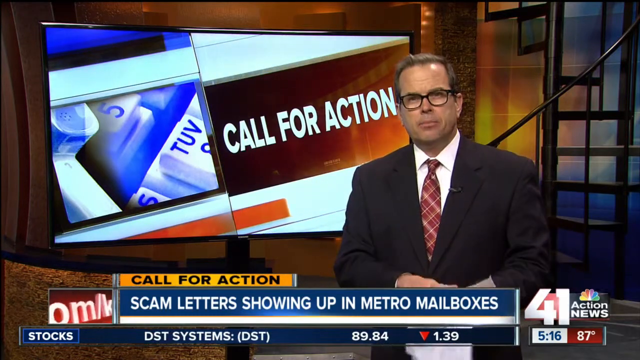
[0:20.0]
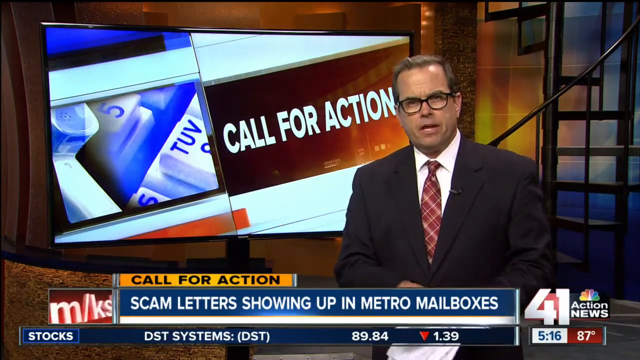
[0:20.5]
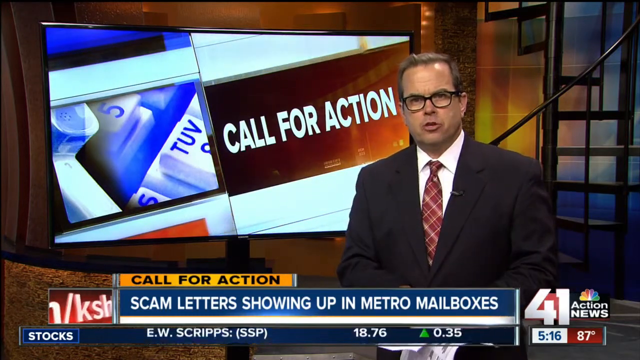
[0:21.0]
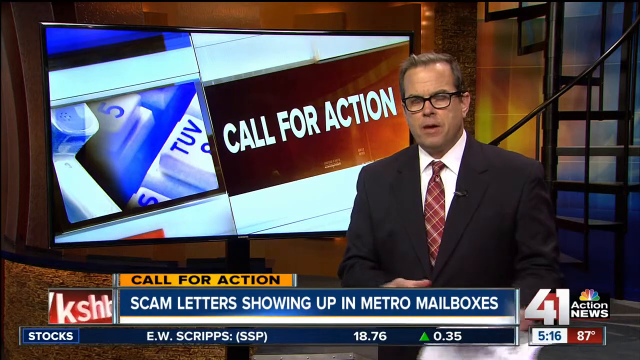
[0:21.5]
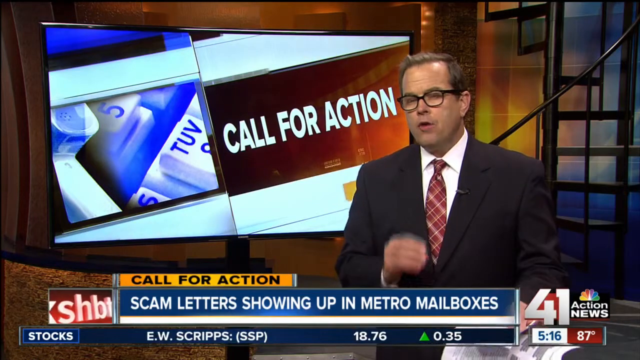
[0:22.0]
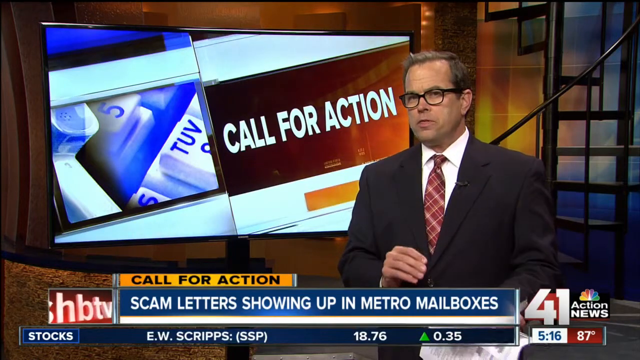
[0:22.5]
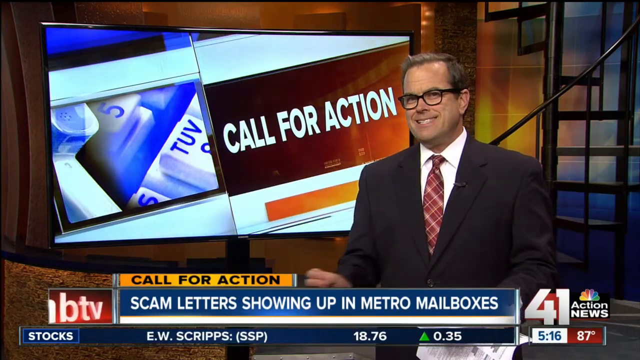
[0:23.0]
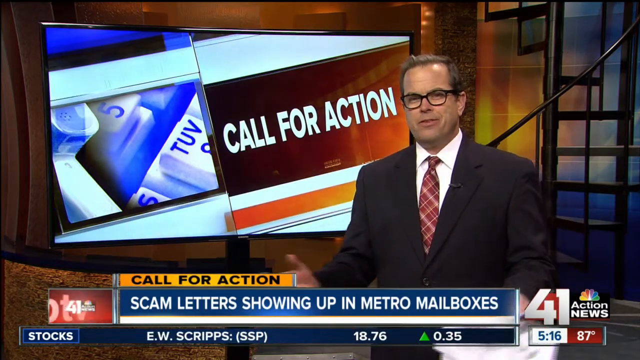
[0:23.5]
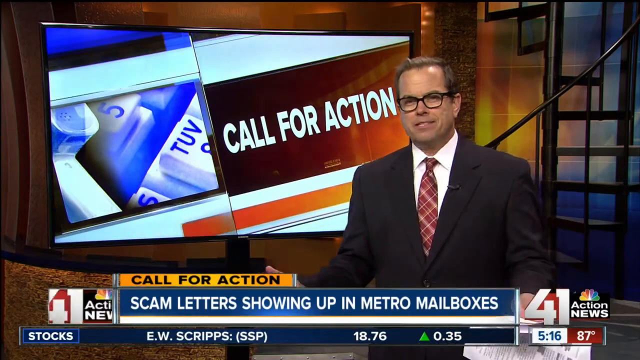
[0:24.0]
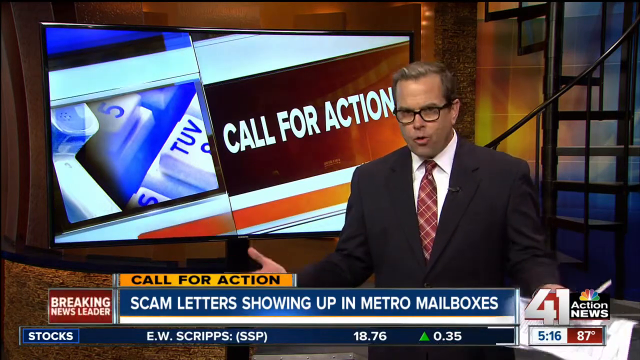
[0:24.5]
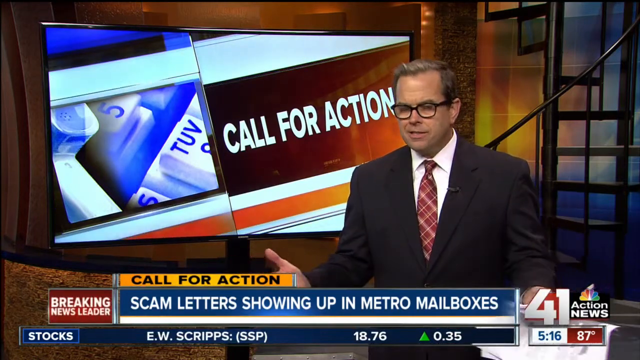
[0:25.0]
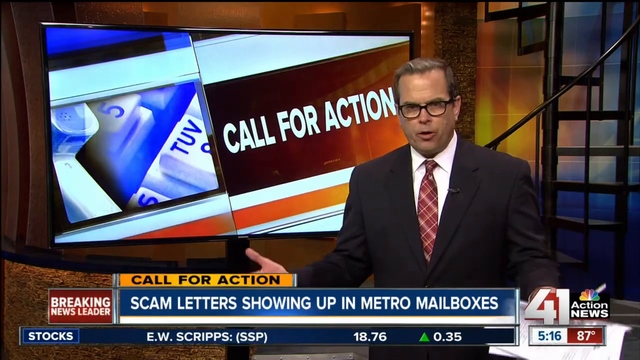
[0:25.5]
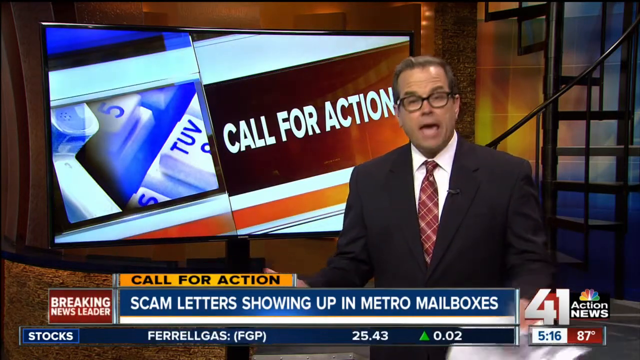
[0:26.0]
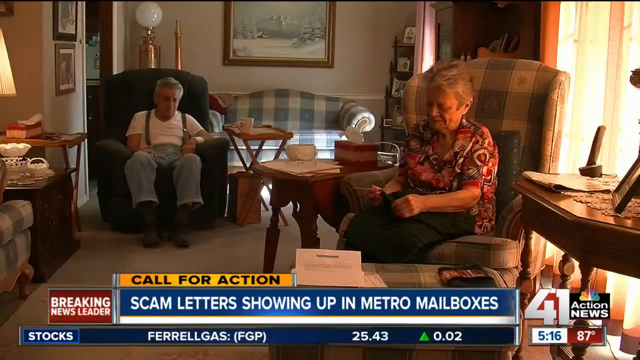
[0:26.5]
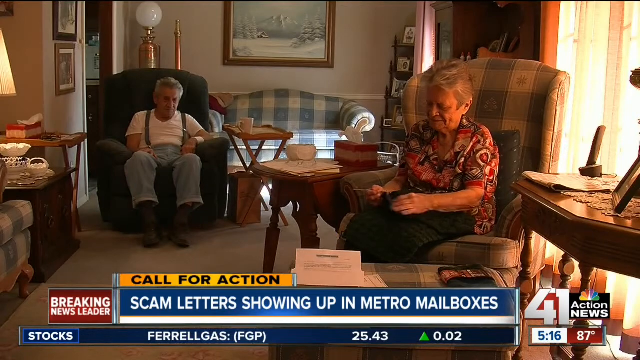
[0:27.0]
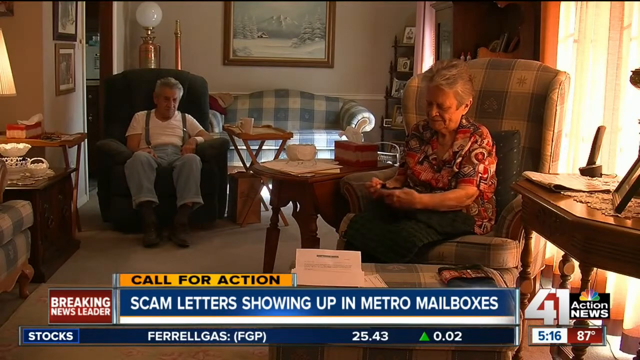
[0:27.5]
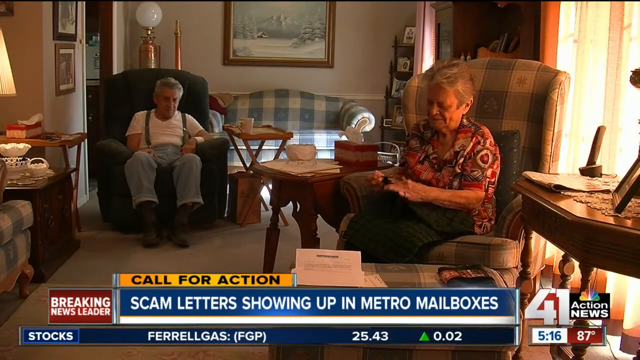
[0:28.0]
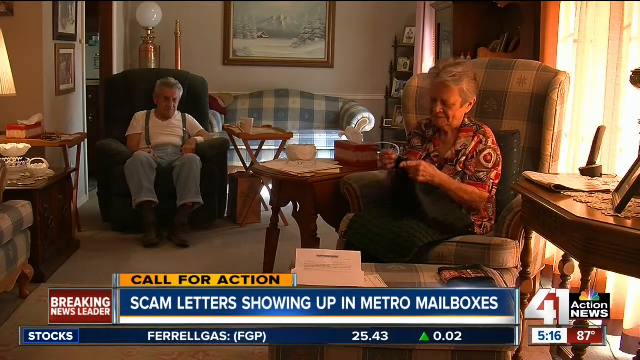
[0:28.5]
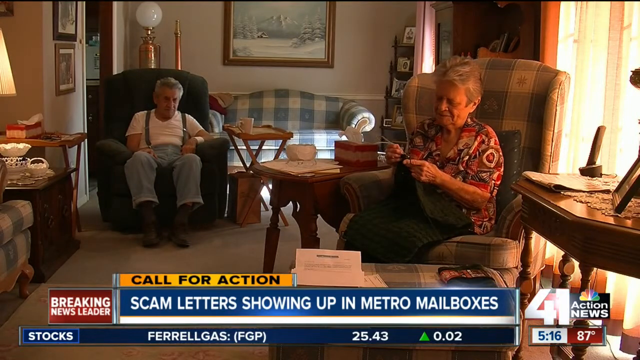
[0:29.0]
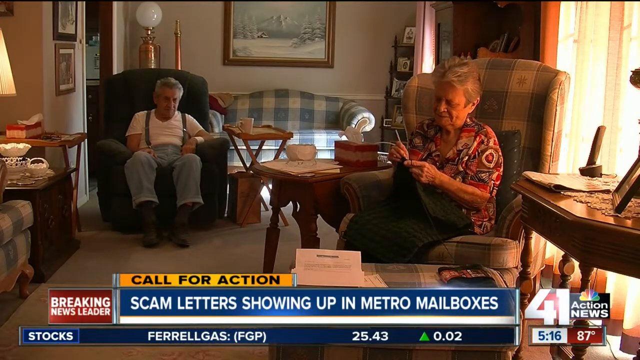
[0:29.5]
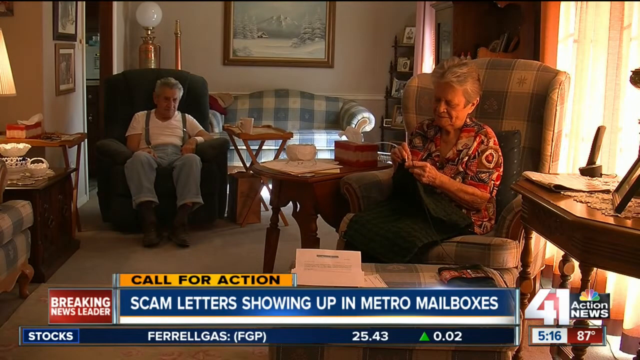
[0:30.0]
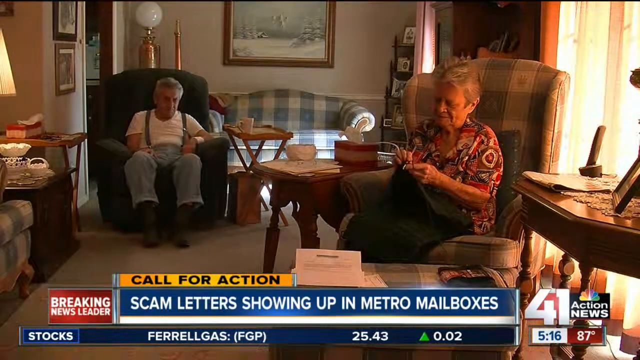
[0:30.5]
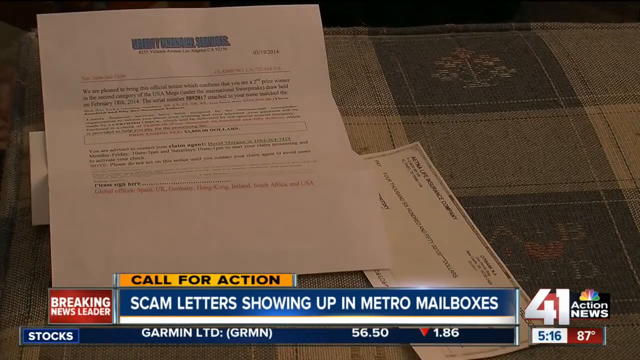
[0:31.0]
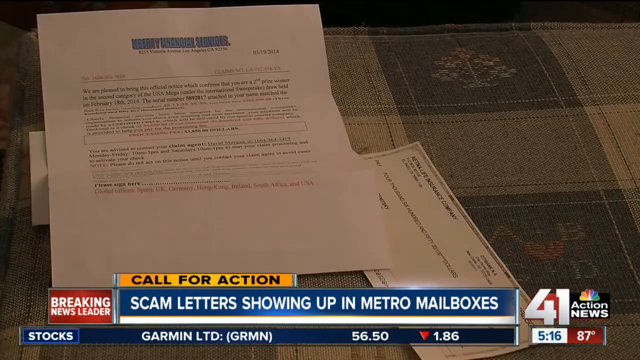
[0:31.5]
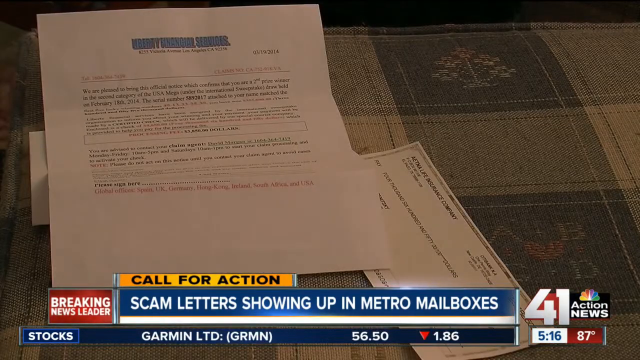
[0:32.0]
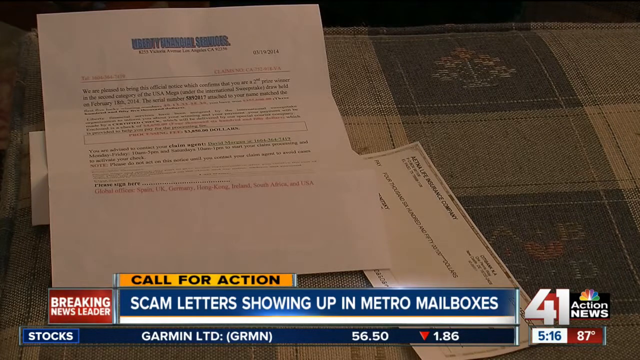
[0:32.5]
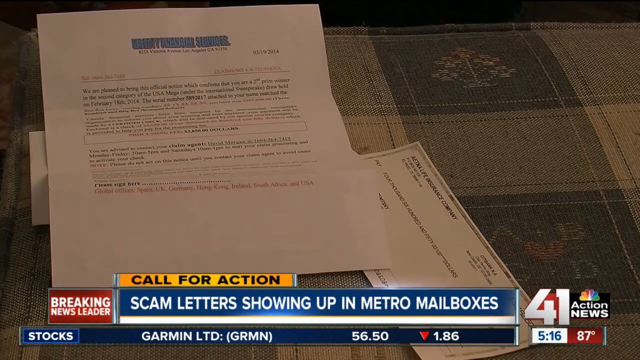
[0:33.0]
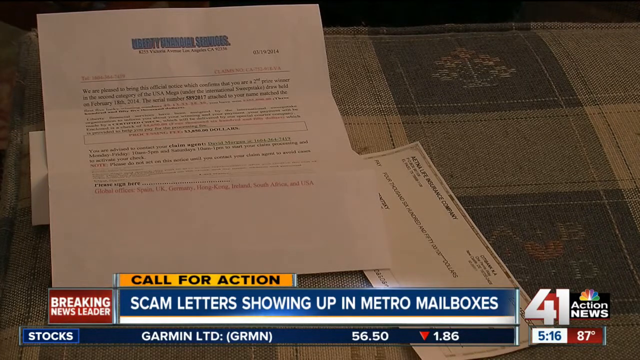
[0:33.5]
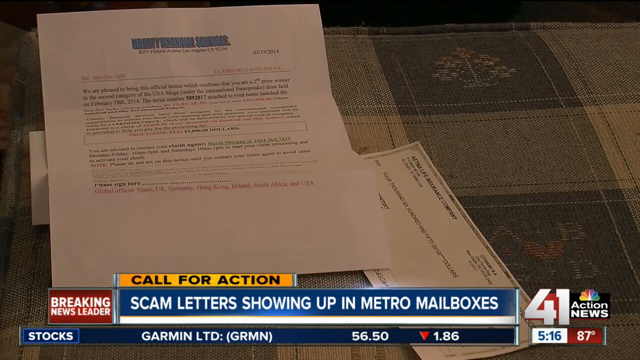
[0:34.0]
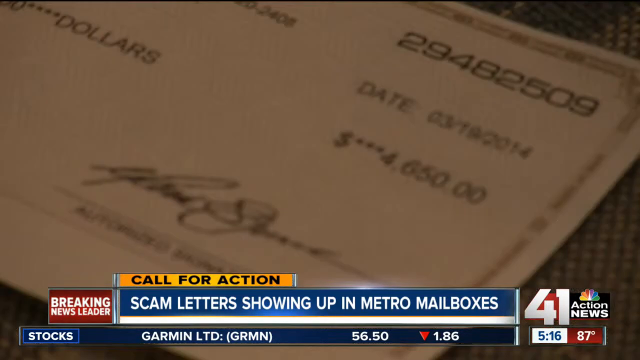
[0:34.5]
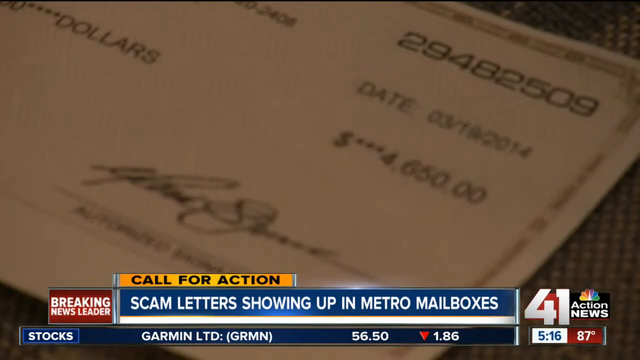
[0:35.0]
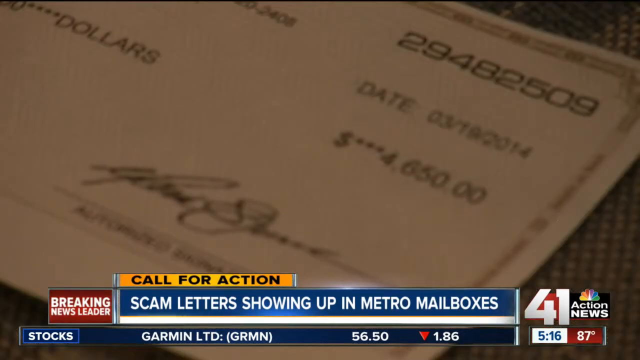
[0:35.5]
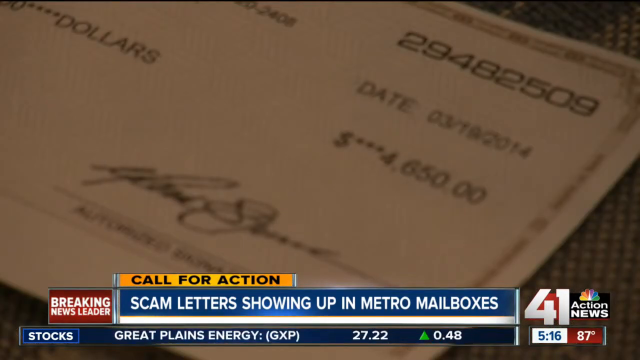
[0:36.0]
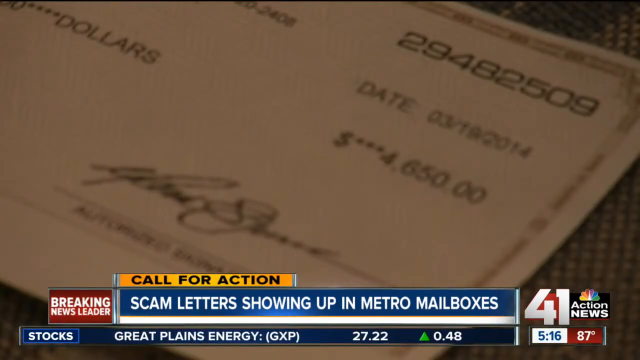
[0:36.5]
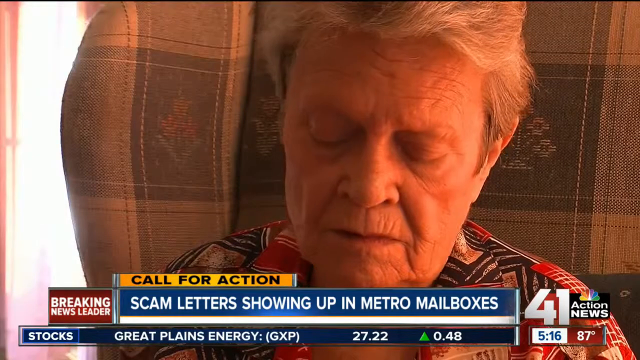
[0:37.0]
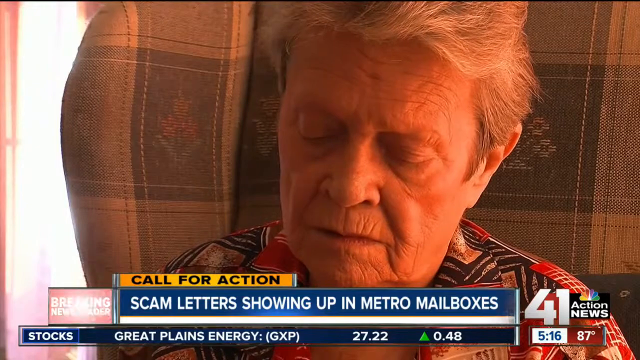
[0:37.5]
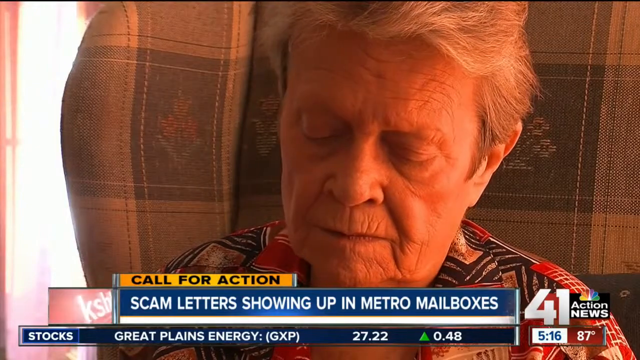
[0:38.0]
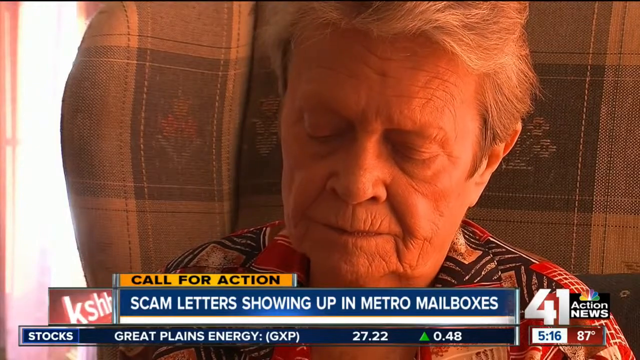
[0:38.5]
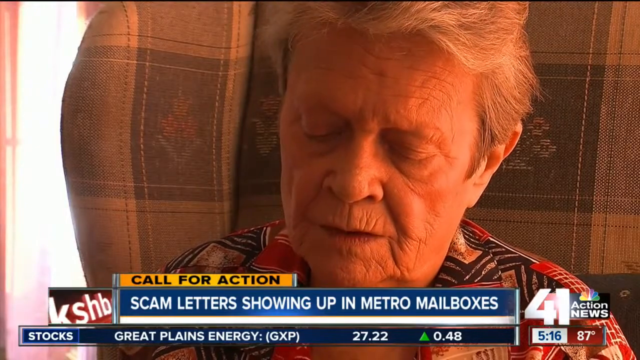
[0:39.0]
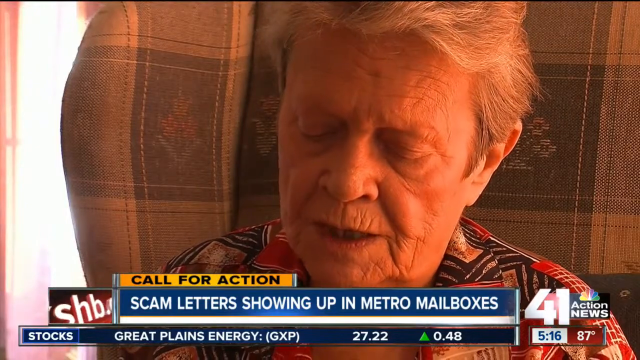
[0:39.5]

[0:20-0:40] A man in a black suit, red tie and white shirt, wearing glasses, stands speaking to the camera. On the right-hand side is a spiral stairway. A caption at the bottom of the screen reads "sky lanterns showing up in natural light pulses," and the call for action appears on the screen behind. The footage then cuts to two elderly people sitting in a room that looks like it has old-school furniture. On the right is an old lady in what looks like a jersey, and on the left a man sits on the couch watching her; a coffee cup is visible. Next comes a picture of a contract with a check on the side, followed by a close-up.